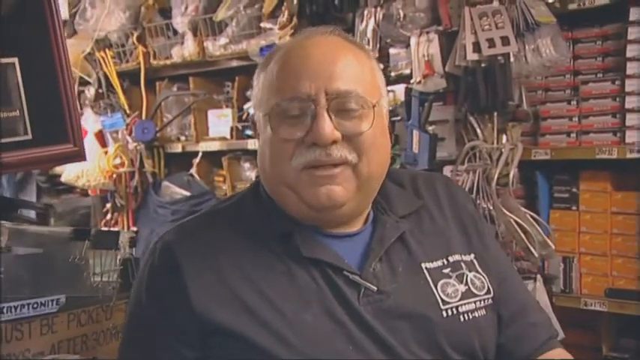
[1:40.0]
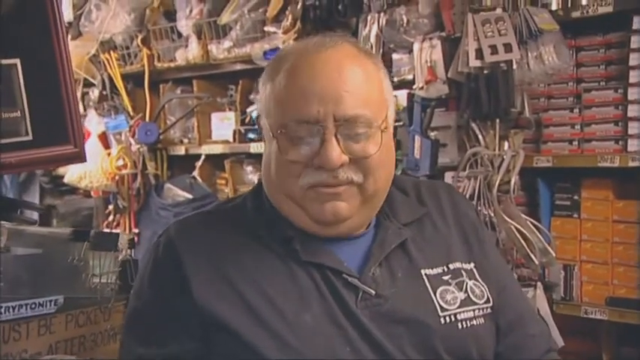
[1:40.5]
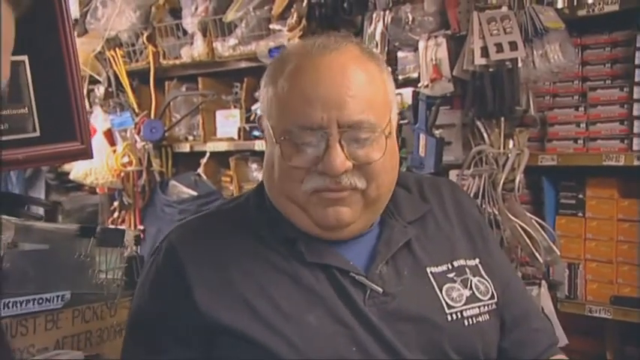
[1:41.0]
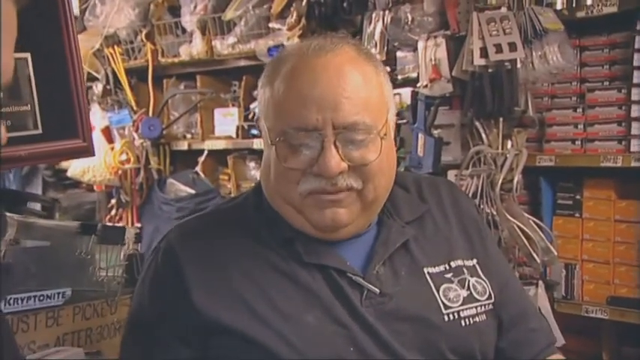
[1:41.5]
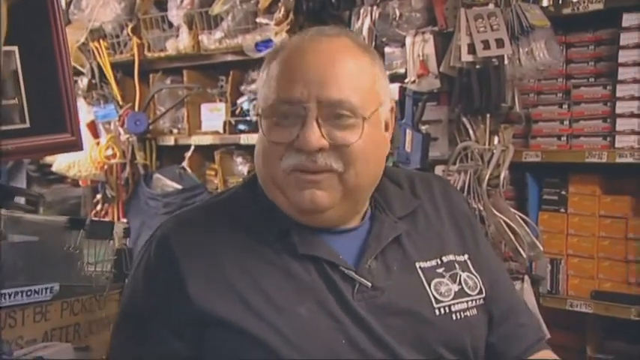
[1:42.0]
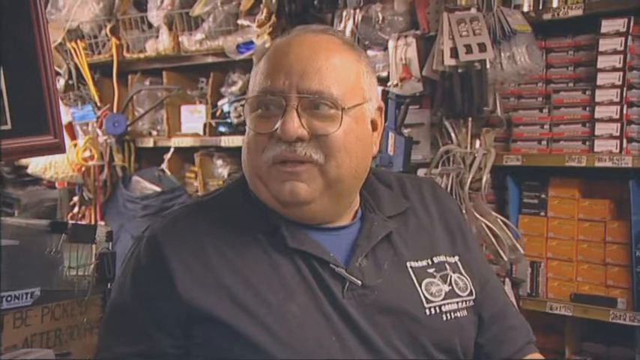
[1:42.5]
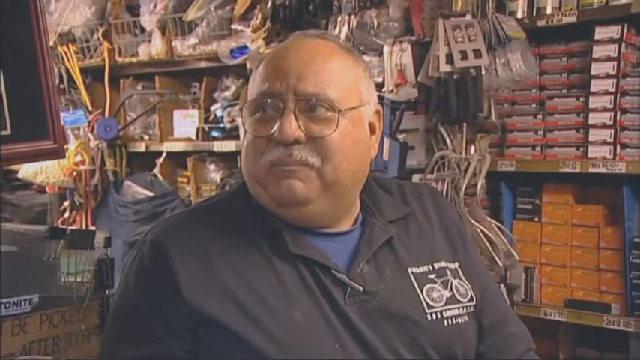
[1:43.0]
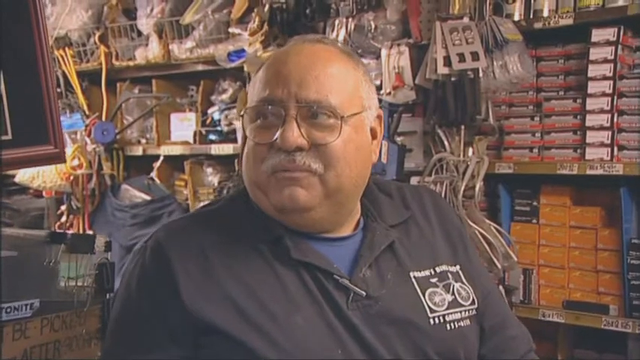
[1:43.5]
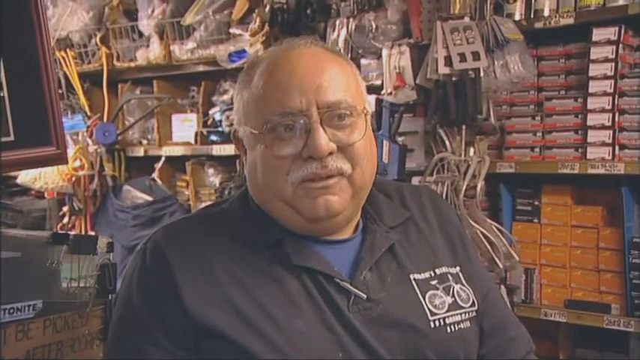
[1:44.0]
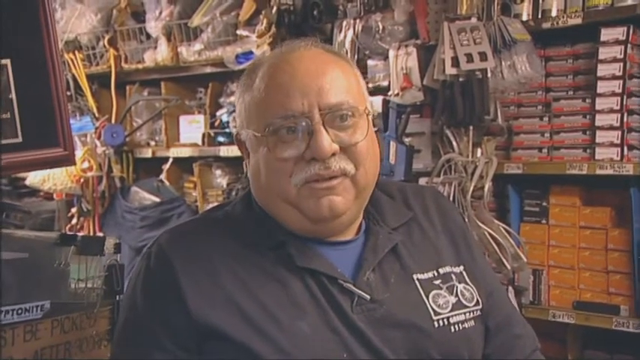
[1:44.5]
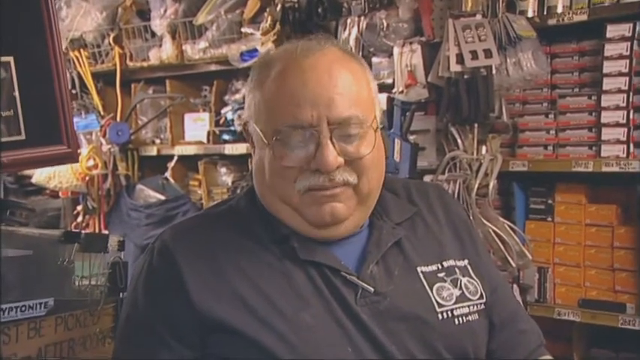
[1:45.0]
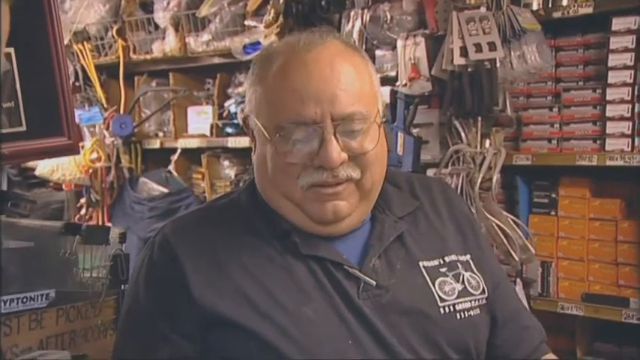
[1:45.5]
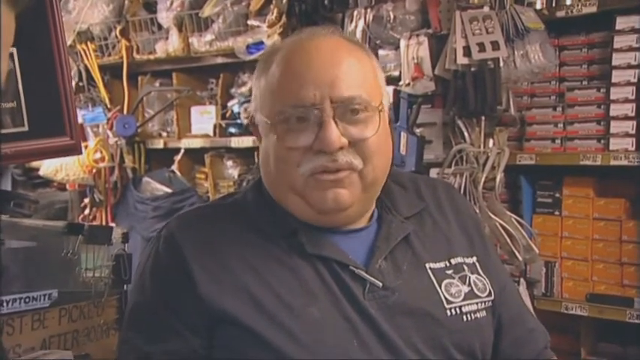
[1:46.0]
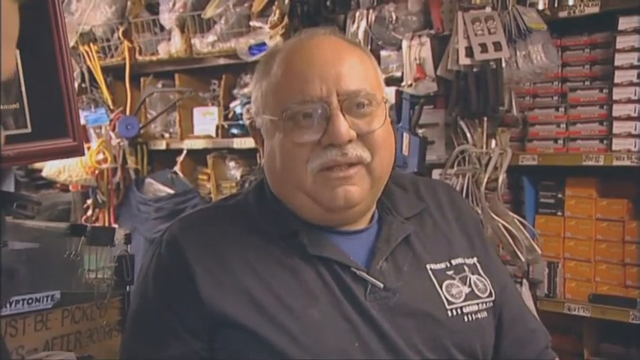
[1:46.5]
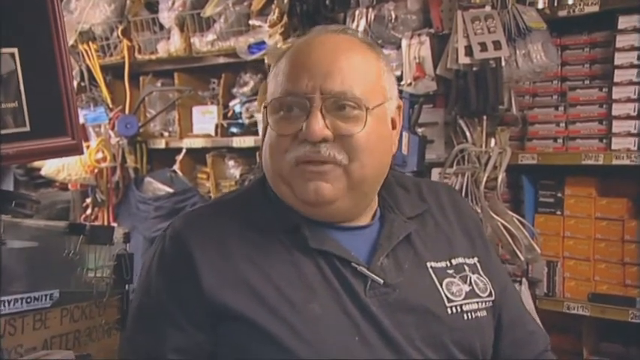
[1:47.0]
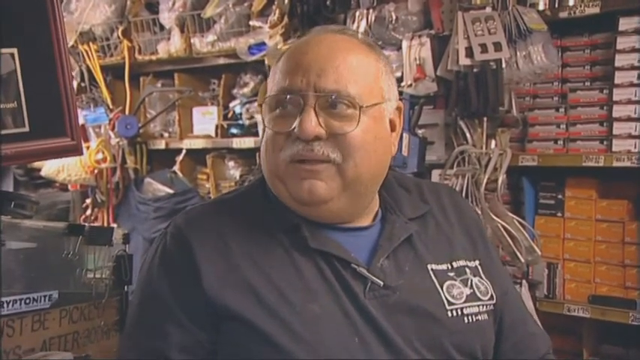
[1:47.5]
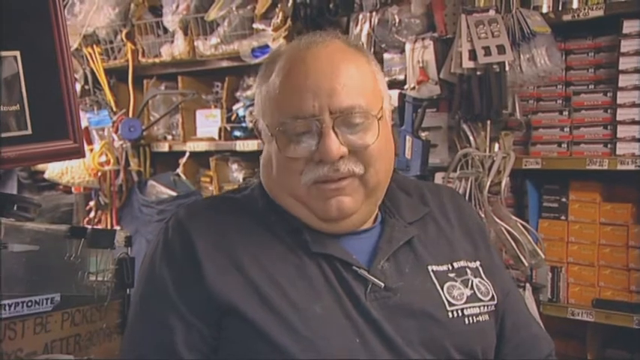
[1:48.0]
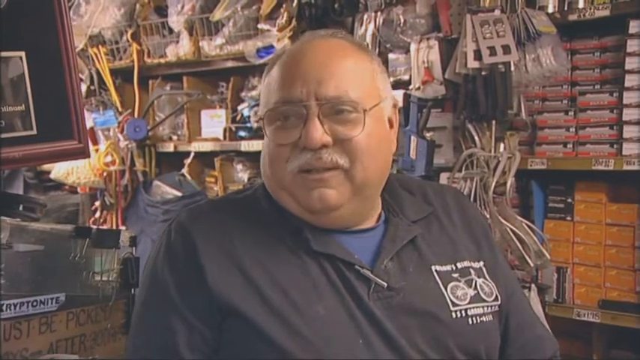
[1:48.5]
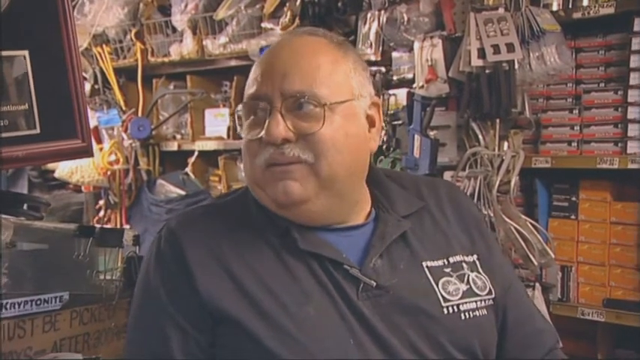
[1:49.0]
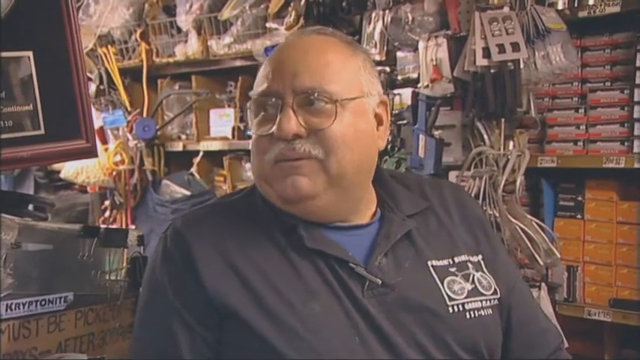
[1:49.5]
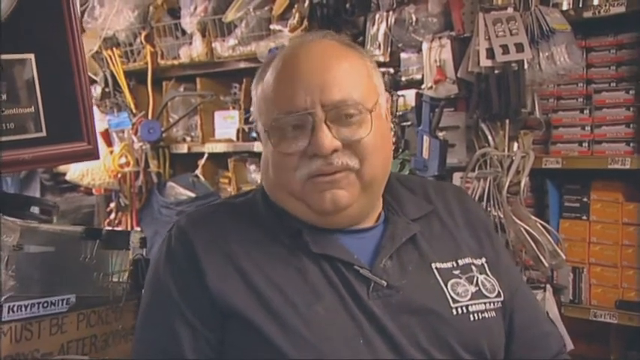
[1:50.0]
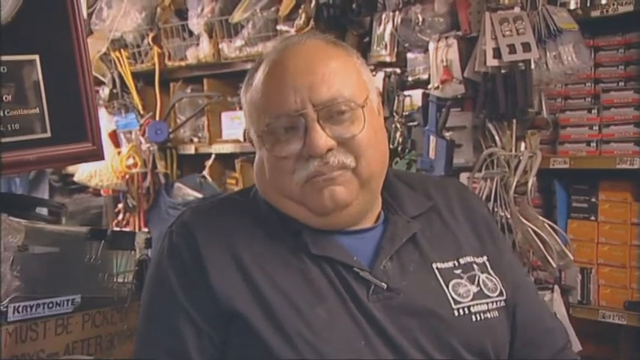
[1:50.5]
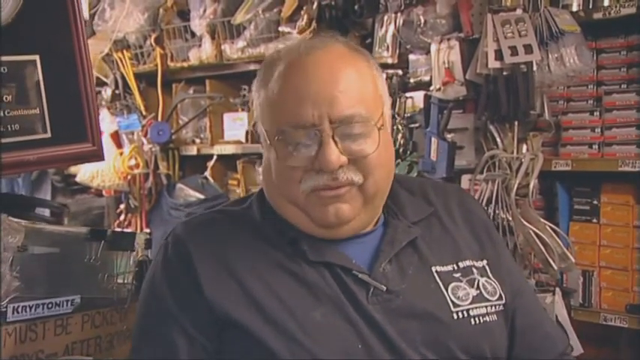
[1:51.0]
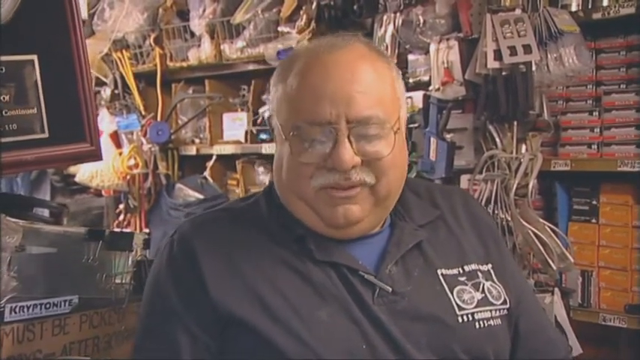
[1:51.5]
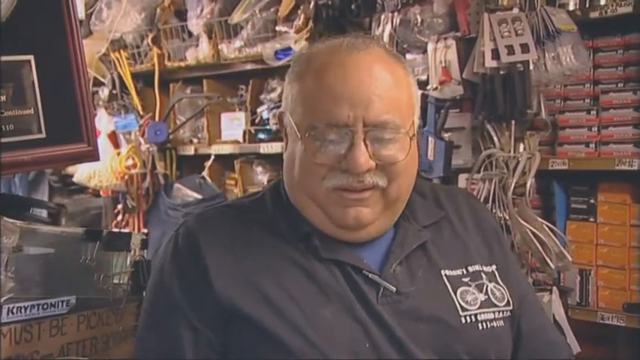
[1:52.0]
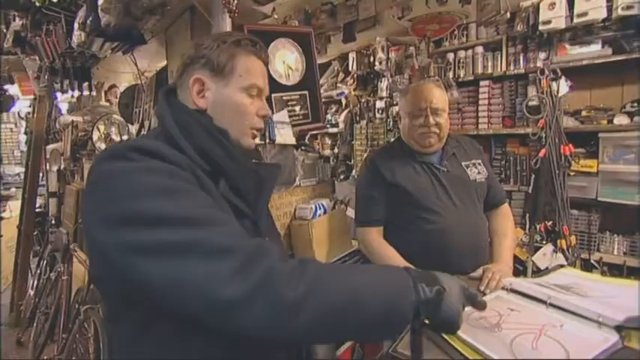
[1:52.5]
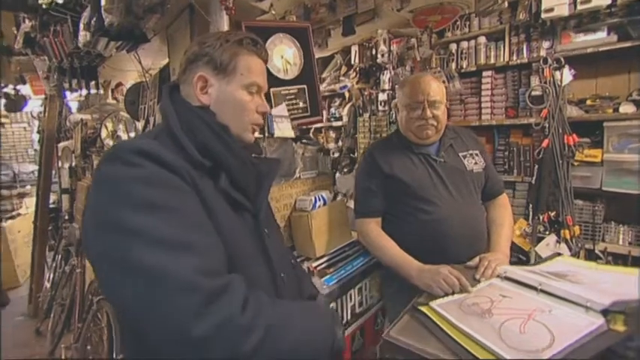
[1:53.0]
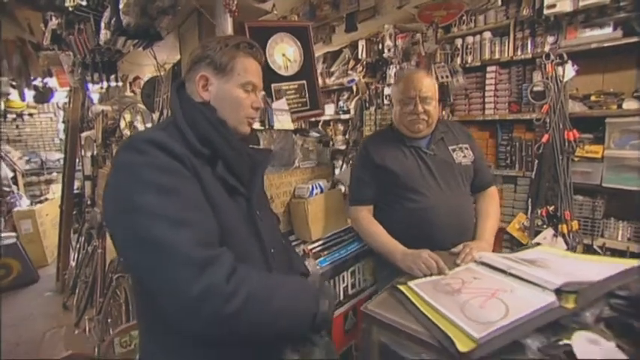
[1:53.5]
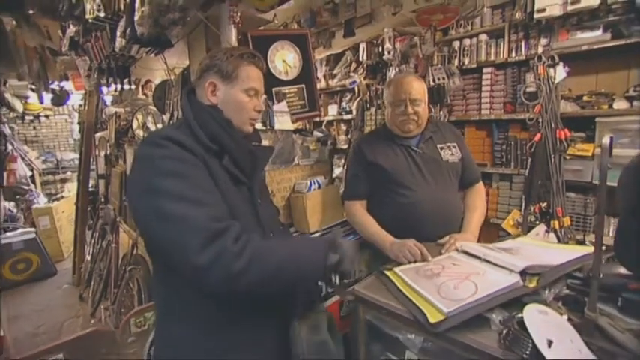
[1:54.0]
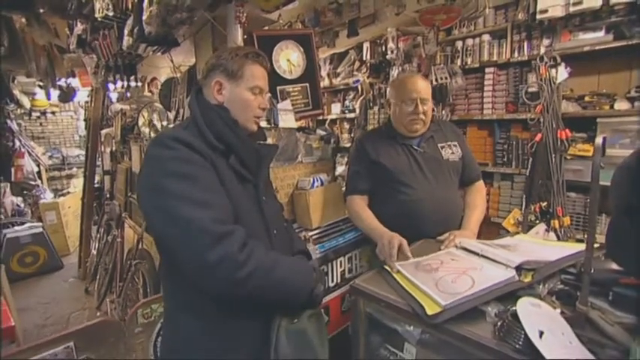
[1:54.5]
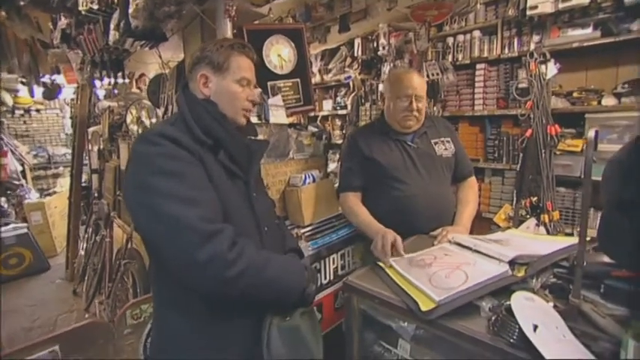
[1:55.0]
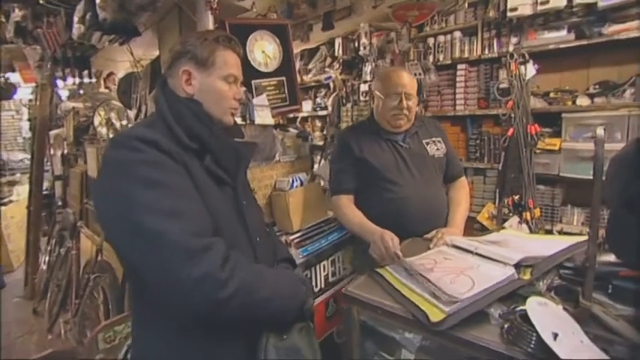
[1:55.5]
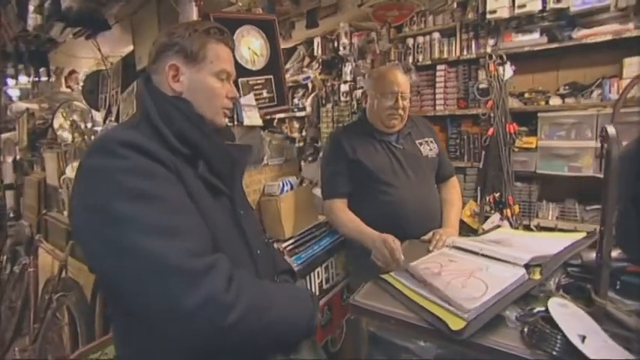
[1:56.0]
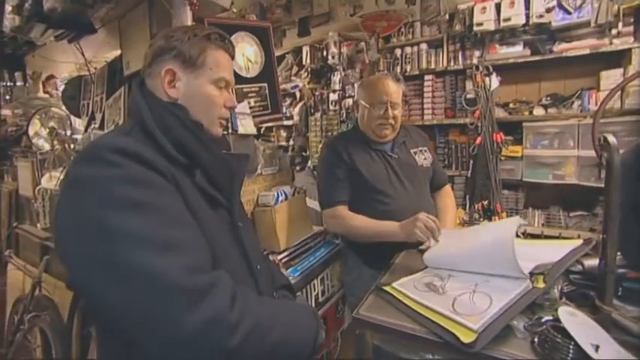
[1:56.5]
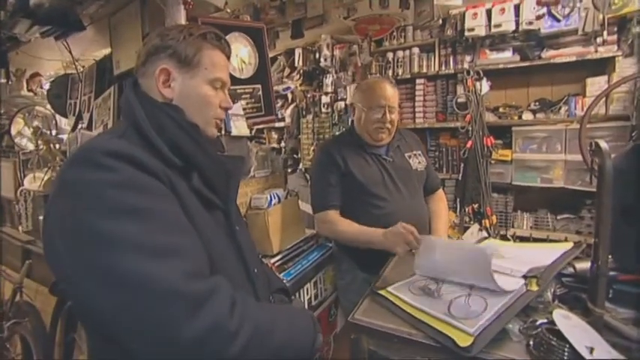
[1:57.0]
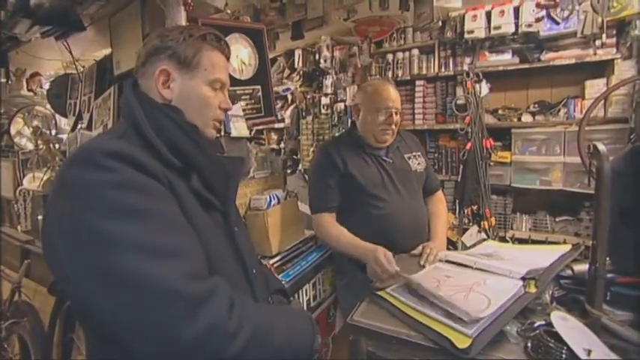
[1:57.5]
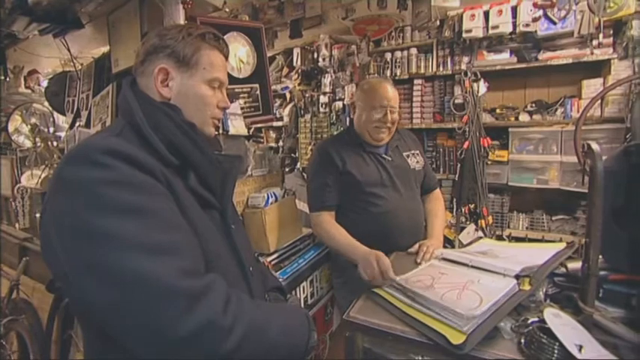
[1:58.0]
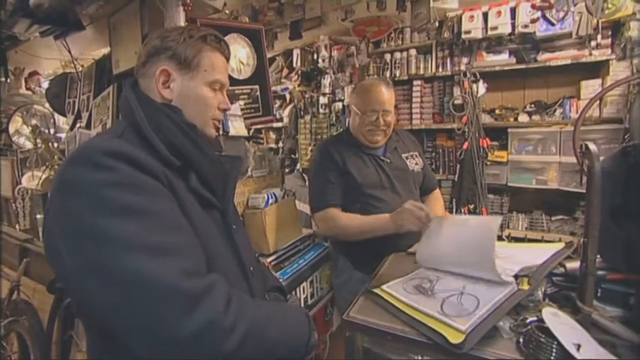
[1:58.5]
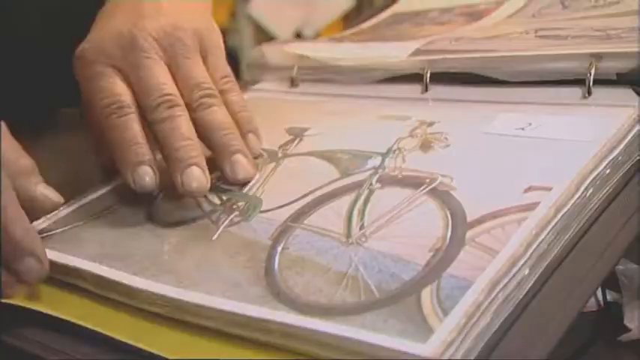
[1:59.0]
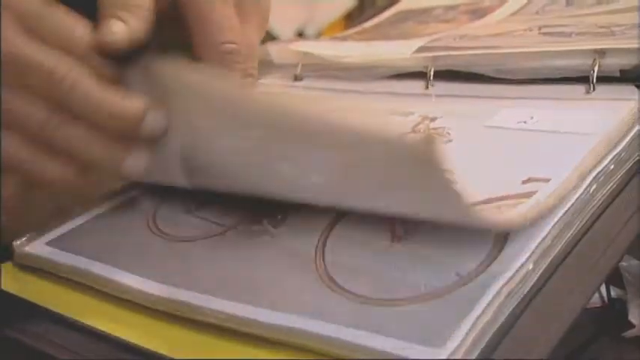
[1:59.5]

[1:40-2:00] The proprietor of Frank's is a heavy, balding man with glasses and a mustache, wearing a blue shirt over a blue t-shirt. With a big smile, he shows the customer the available bikes. Where the customer is pointing, the proprietor wants to show him a different bike than the one he has chosen. The walls behind the proprietor are crowded with parts and supplies.